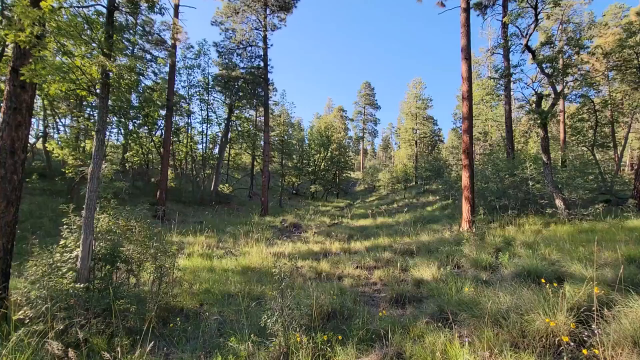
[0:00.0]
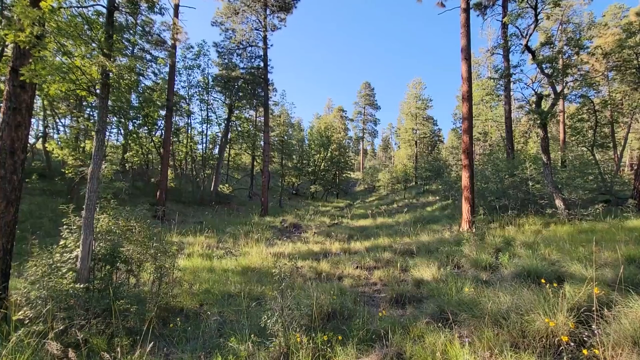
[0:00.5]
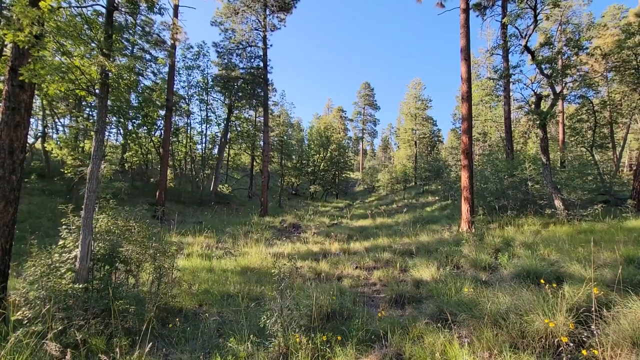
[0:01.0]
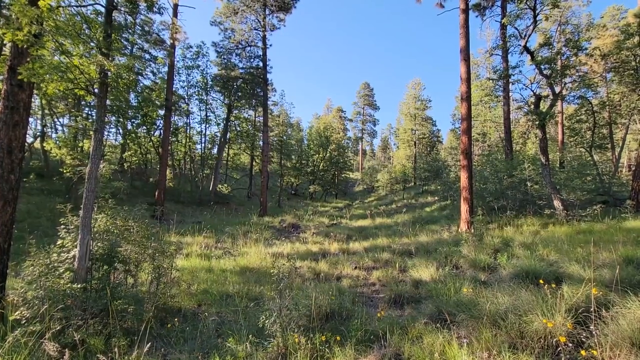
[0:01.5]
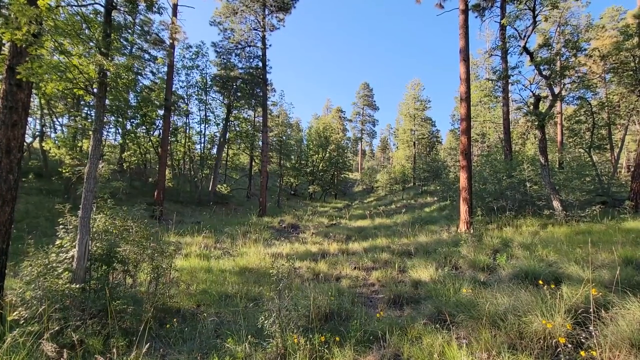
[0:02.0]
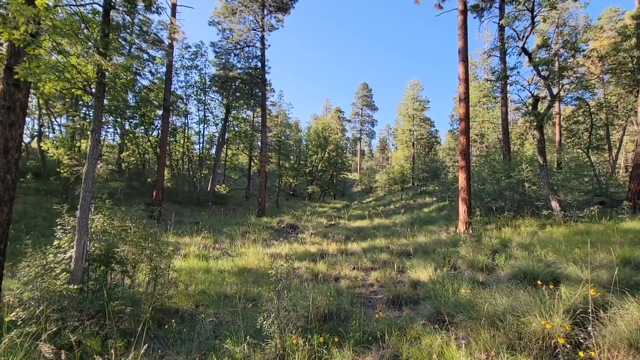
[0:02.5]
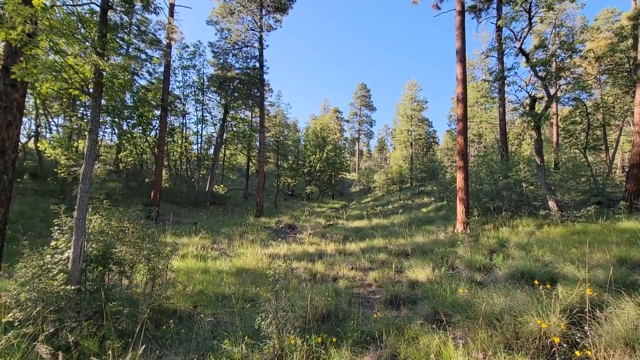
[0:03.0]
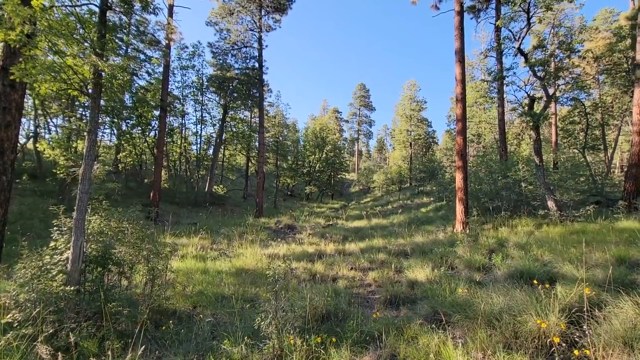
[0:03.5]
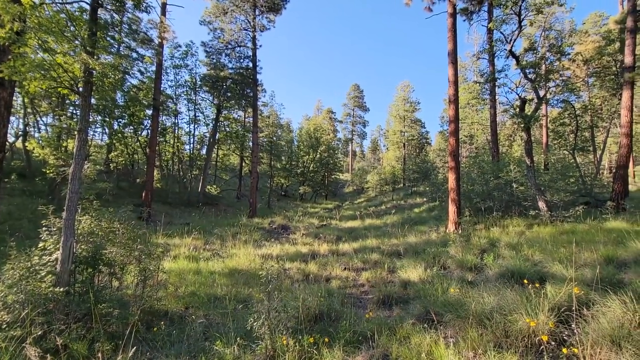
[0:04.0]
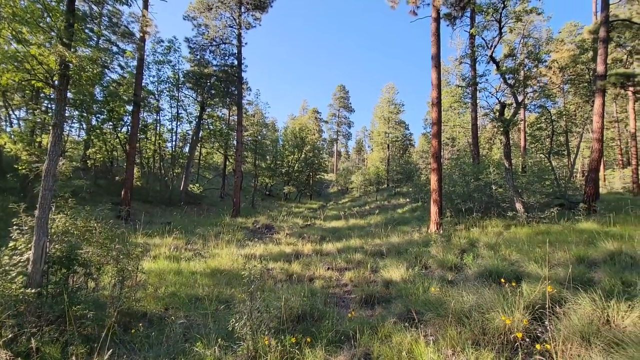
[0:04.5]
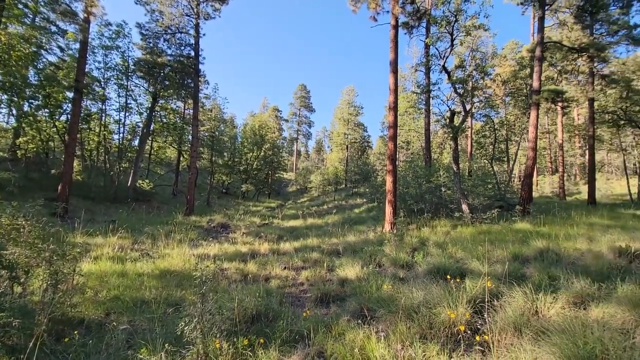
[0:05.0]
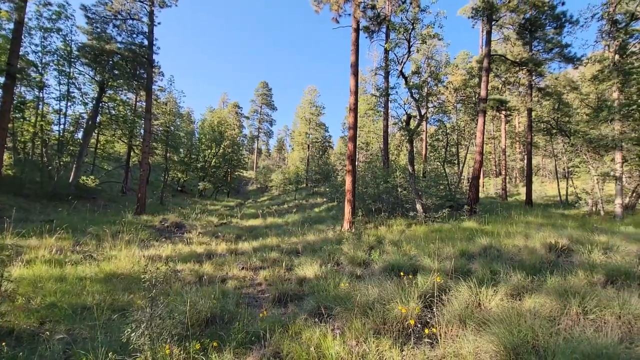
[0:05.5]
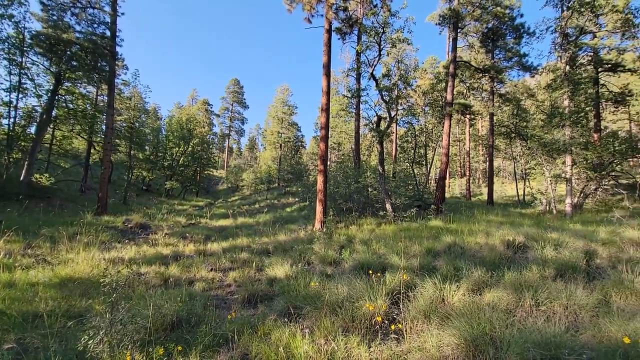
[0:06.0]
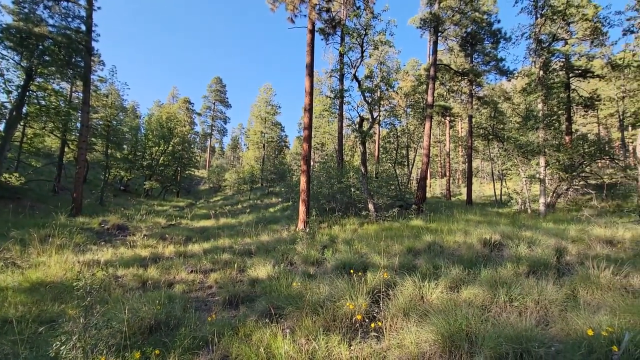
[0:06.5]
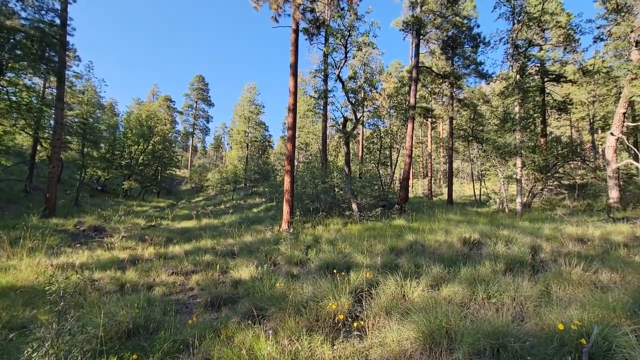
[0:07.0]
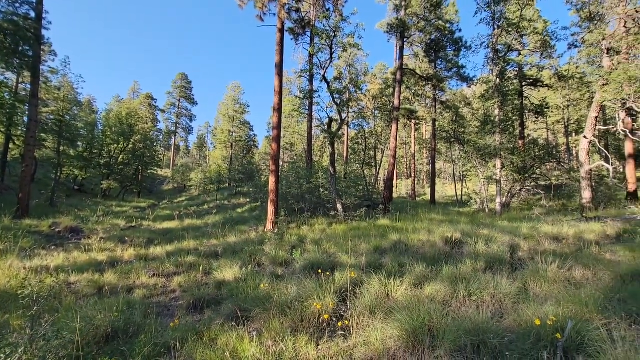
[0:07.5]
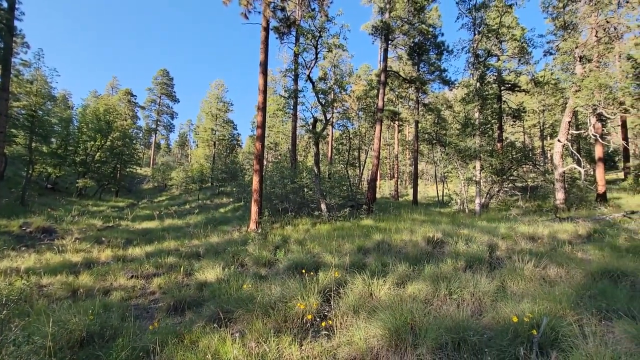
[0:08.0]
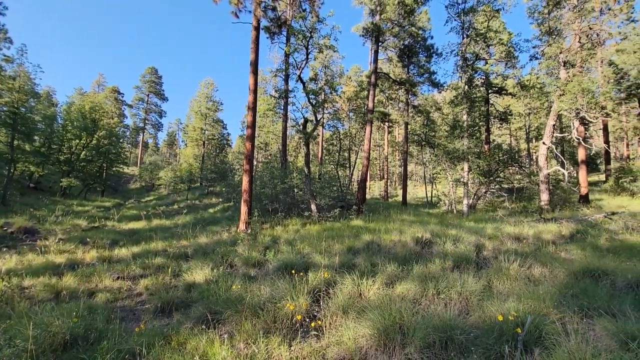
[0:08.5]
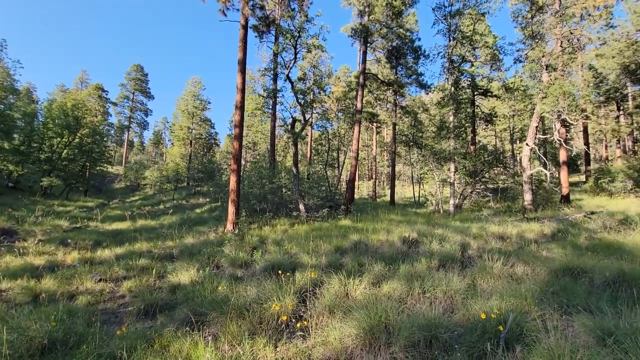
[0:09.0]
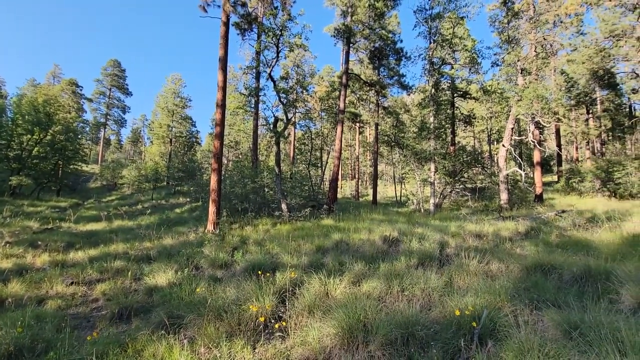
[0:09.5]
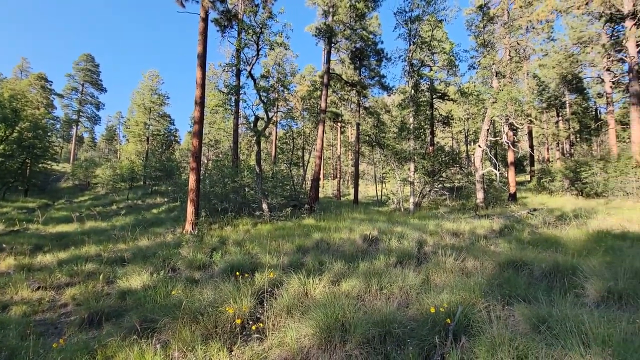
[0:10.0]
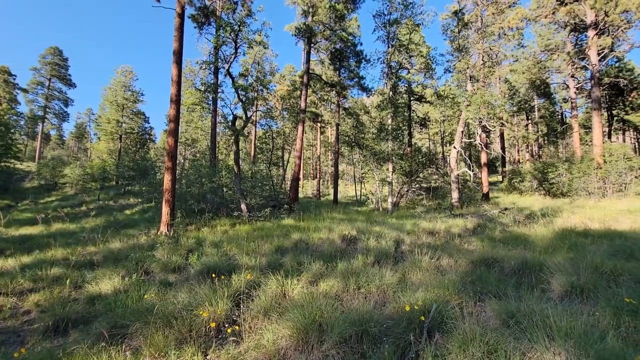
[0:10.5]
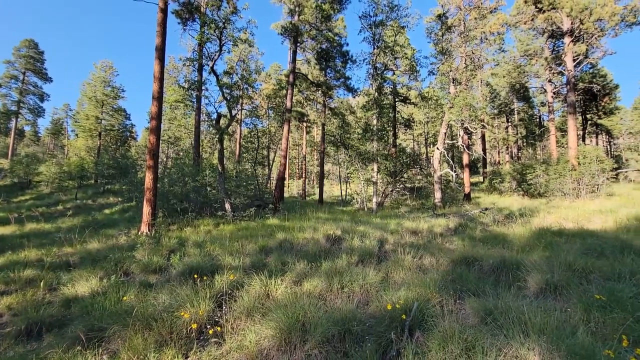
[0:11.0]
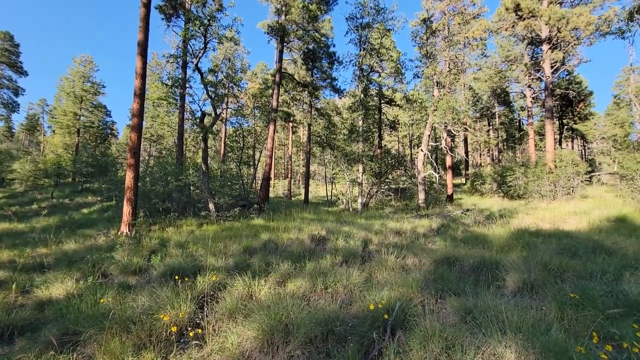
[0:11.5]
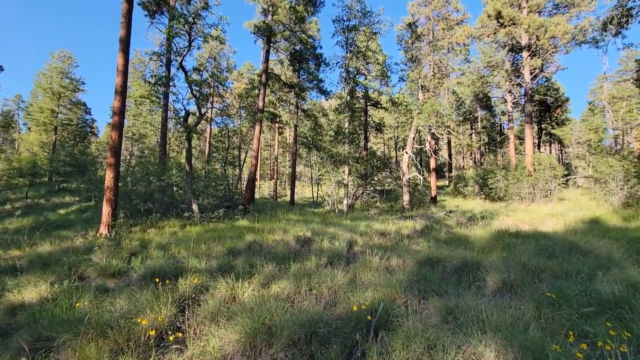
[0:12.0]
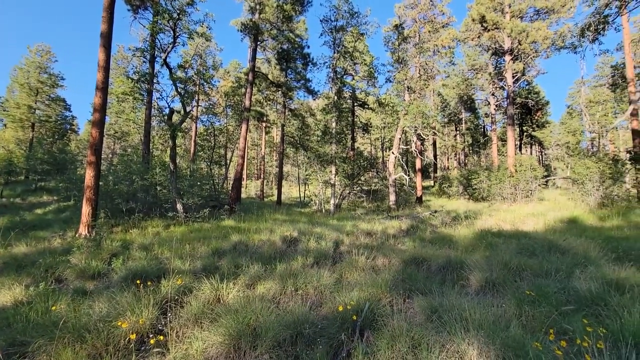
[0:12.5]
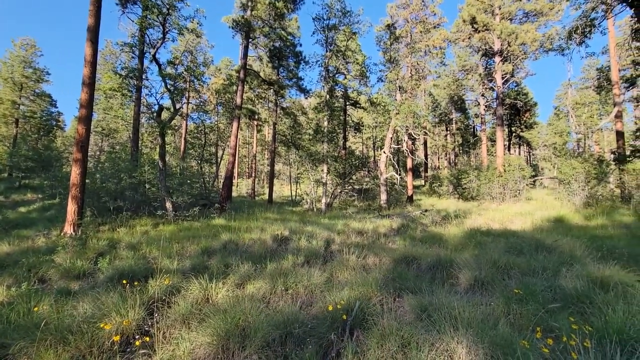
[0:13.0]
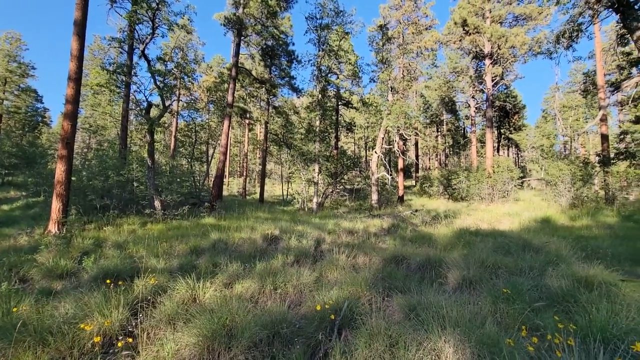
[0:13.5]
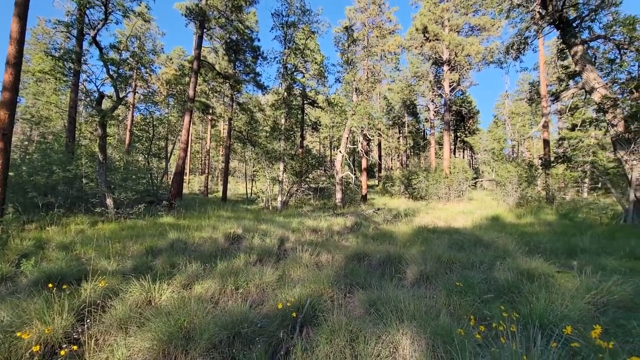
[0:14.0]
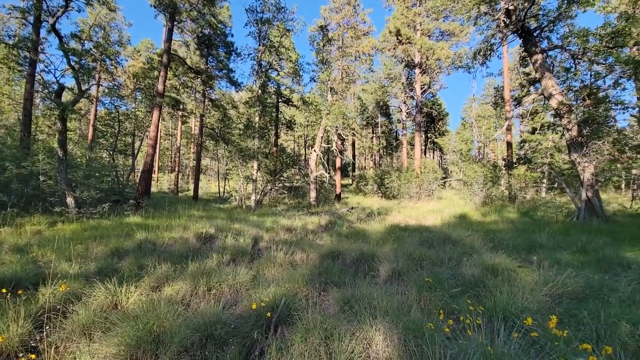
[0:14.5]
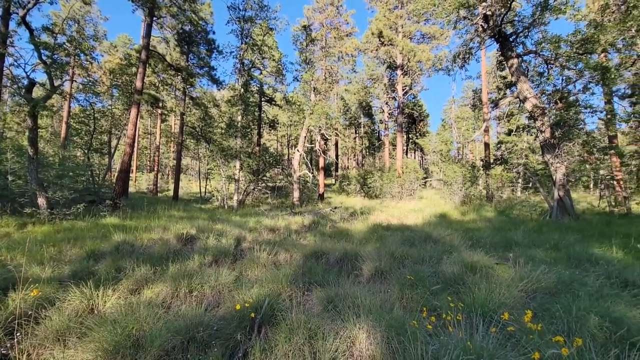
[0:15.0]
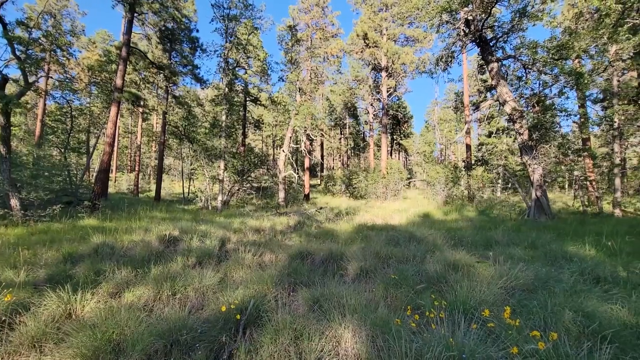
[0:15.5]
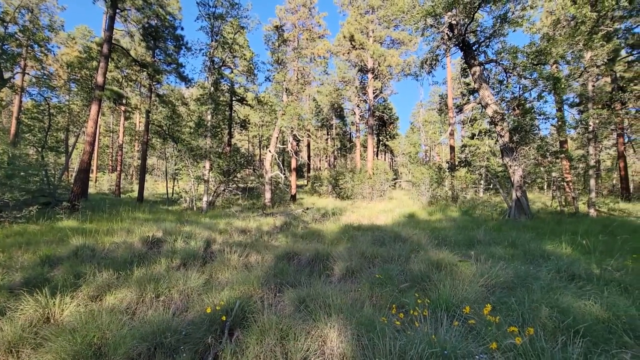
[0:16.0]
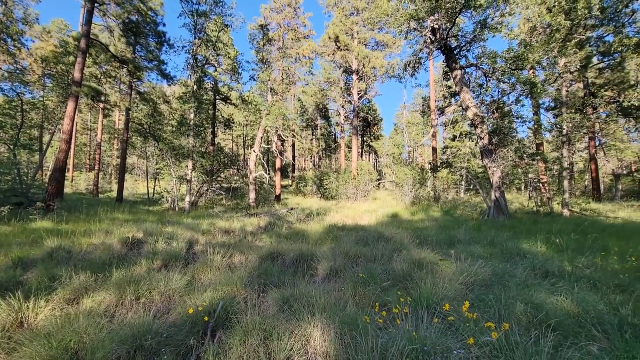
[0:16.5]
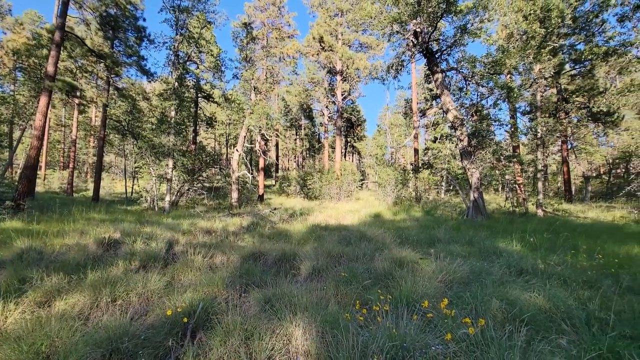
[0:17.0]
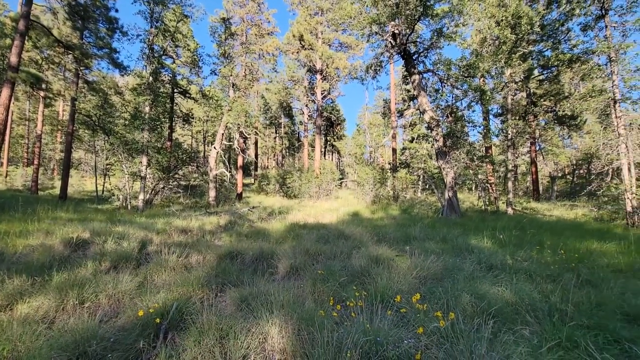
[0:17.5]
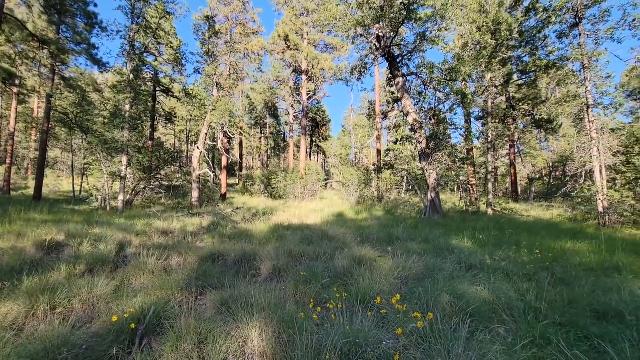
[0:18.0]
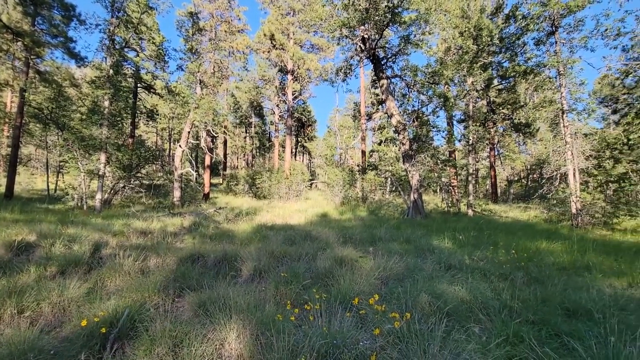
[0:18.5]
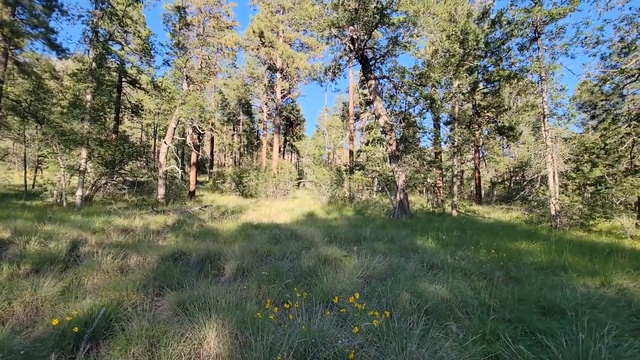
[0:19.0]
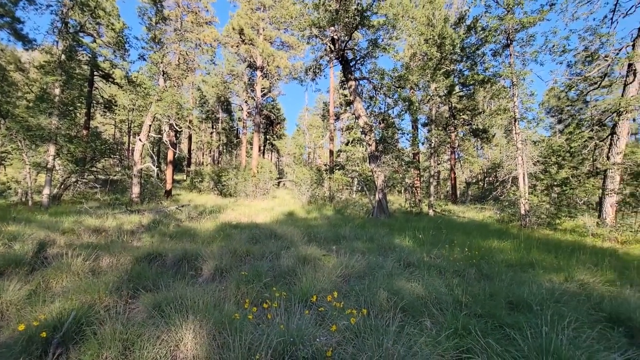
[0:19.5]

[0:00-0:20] A cleared area in what appears to be a forested area is seen. Ahead and to either side stand tall trees. At the bottom of the view is green and brown grass that is not very tall, along with some bushes and some tall sprigs of grass and weed. The sky is bright blue with no clouds. The camera pans very smoothly and slowly to the right, continuing to show very tall trees and more of the cleared area where the camera person is standing. Patches of bright yellow flowers move slightly in the breeze. Some of the grass is a little taller and some shorter; some is browned and some is green. At all angles, the sky is bright blue and clear.